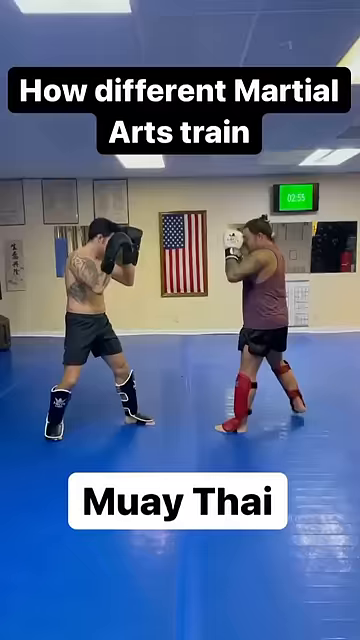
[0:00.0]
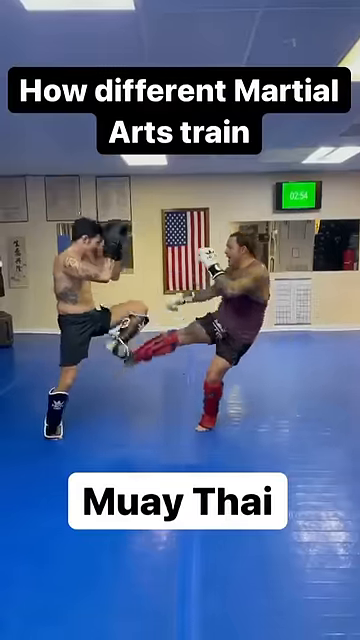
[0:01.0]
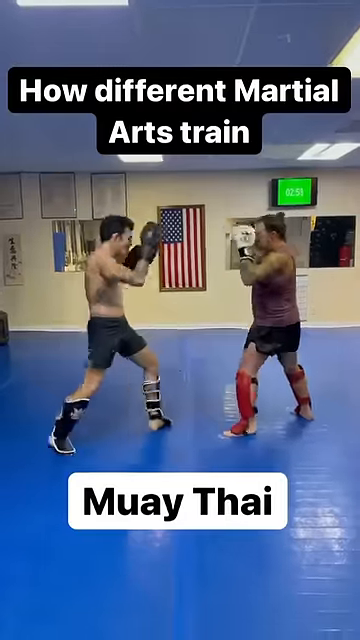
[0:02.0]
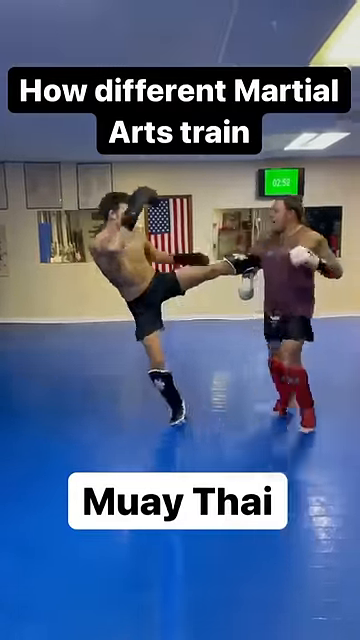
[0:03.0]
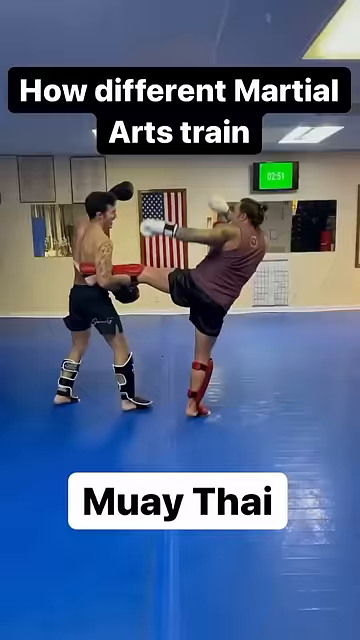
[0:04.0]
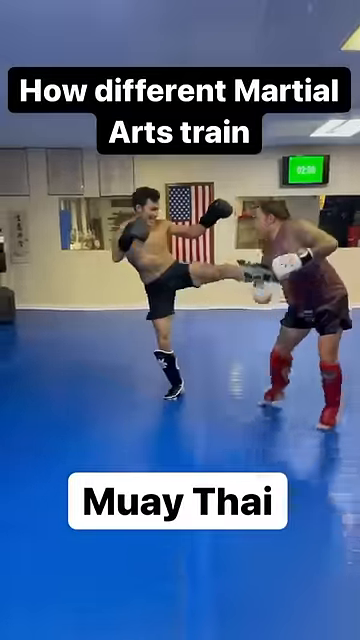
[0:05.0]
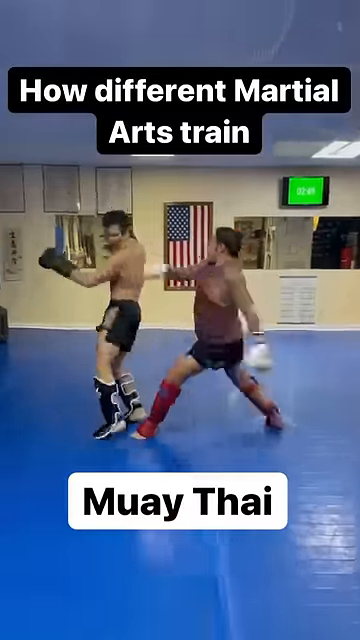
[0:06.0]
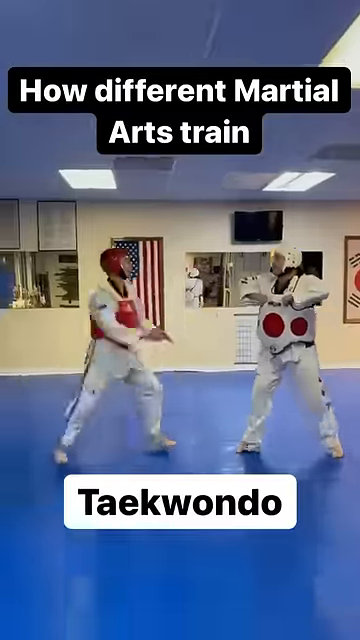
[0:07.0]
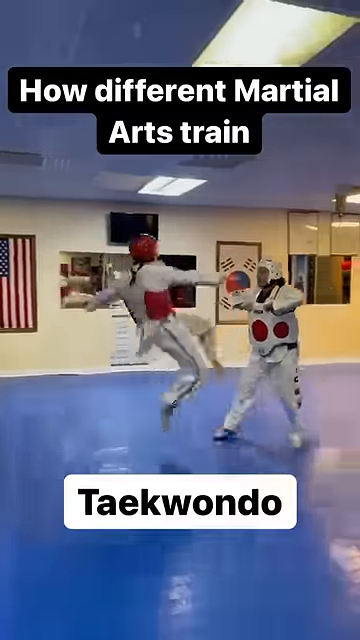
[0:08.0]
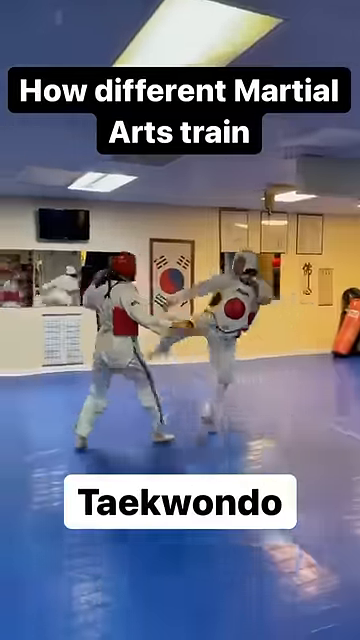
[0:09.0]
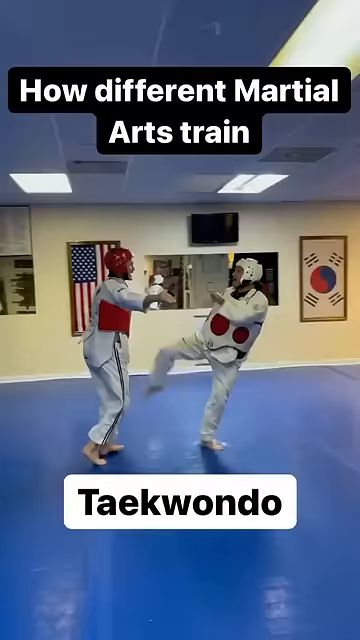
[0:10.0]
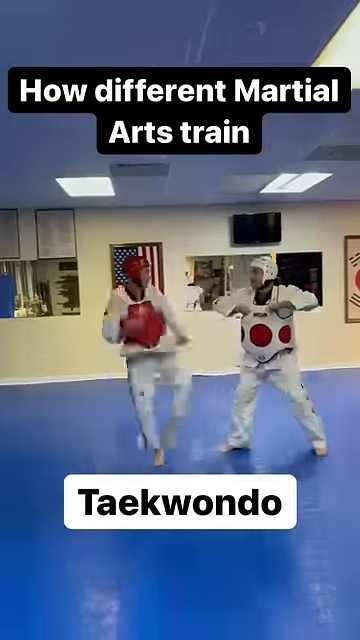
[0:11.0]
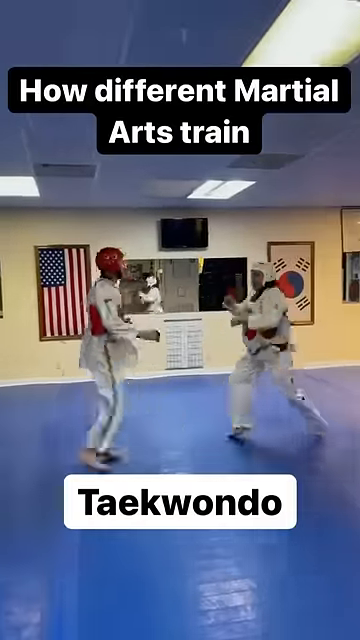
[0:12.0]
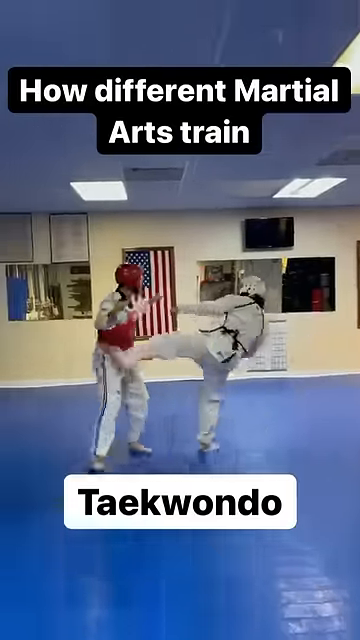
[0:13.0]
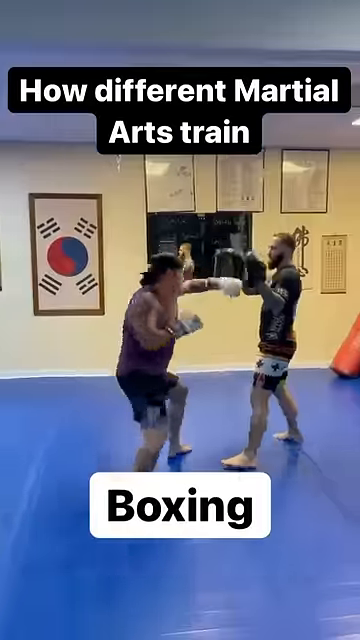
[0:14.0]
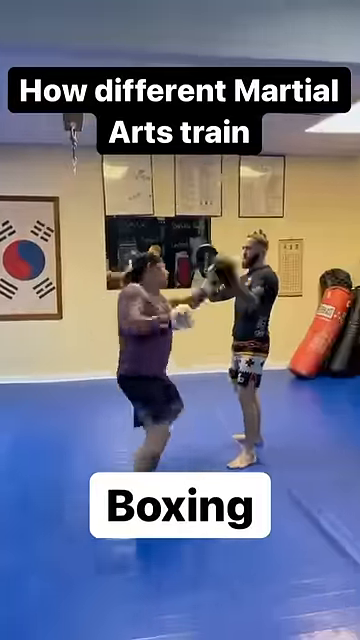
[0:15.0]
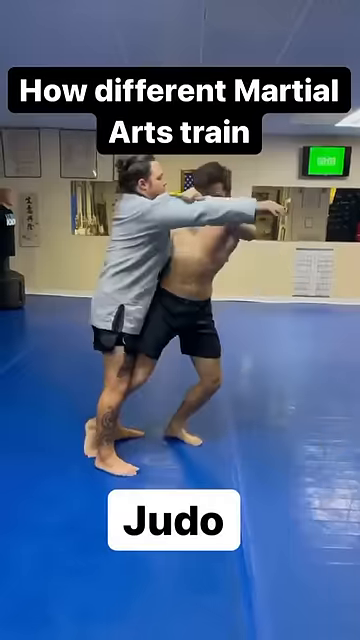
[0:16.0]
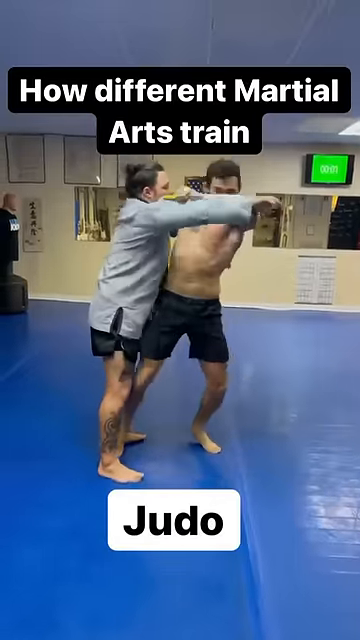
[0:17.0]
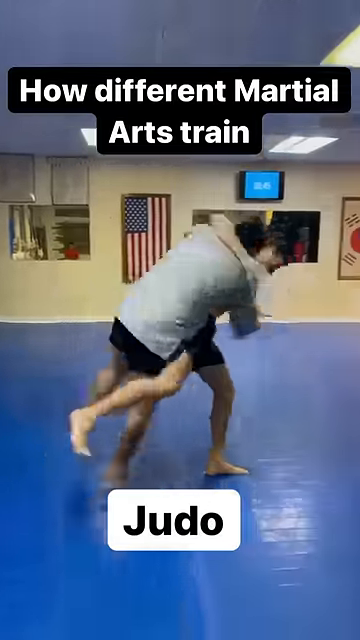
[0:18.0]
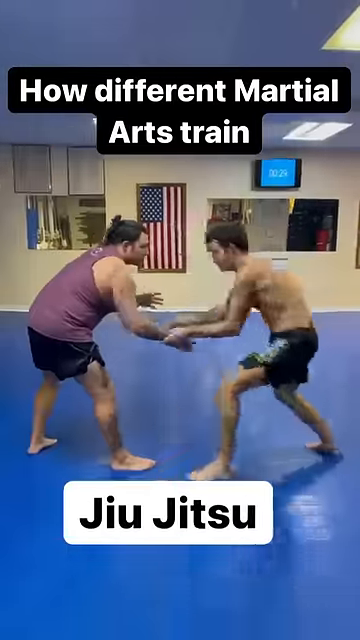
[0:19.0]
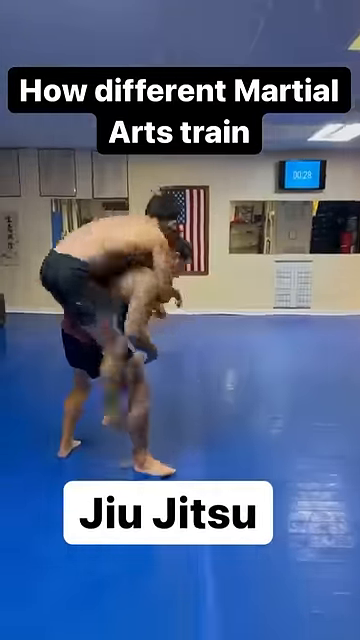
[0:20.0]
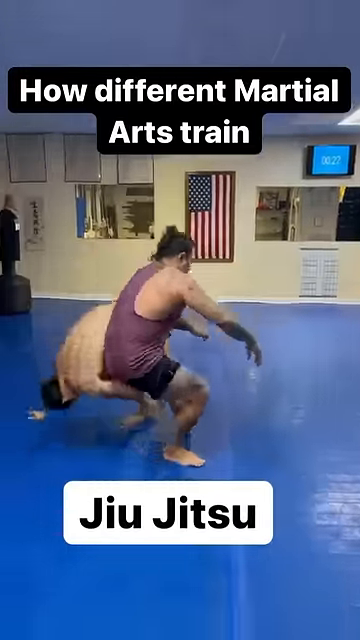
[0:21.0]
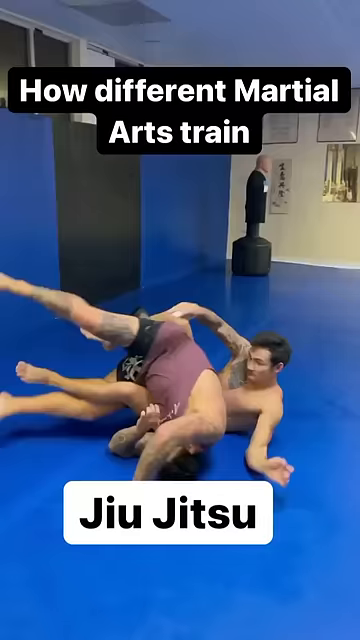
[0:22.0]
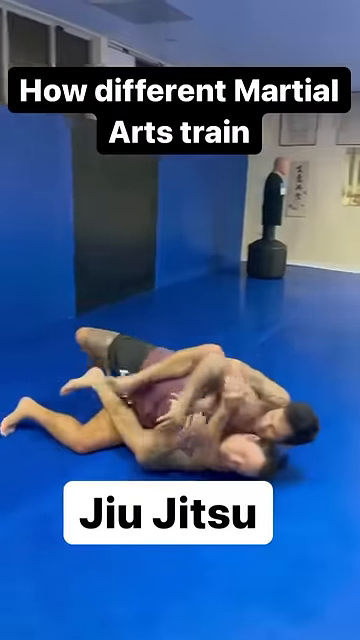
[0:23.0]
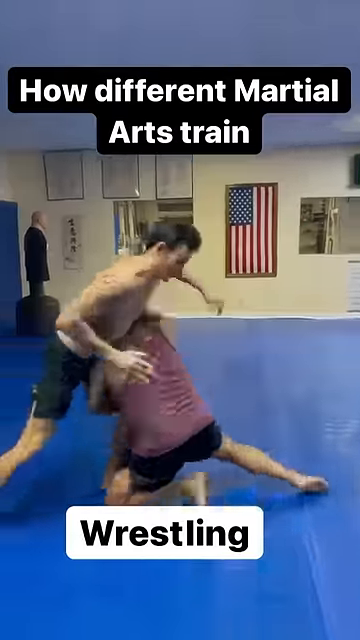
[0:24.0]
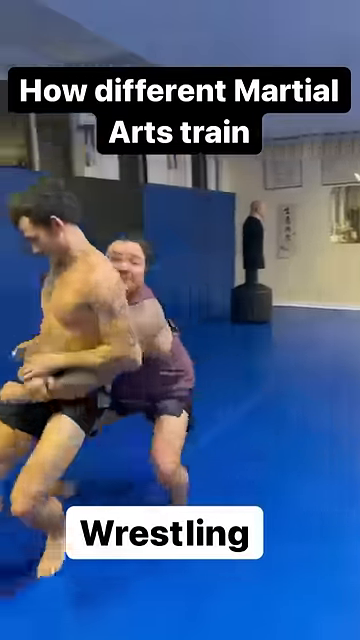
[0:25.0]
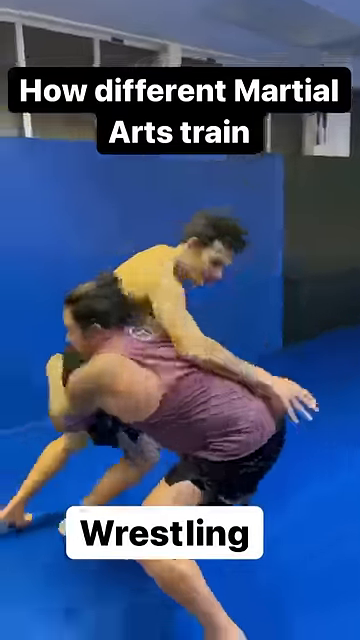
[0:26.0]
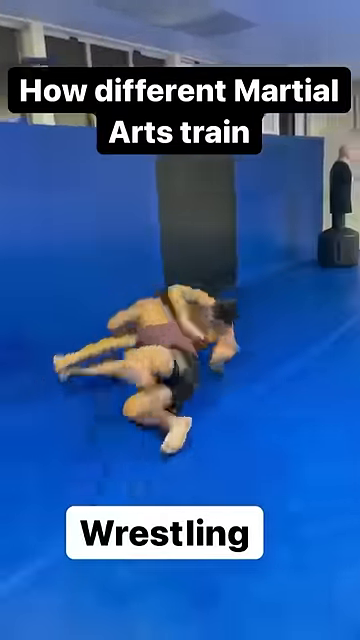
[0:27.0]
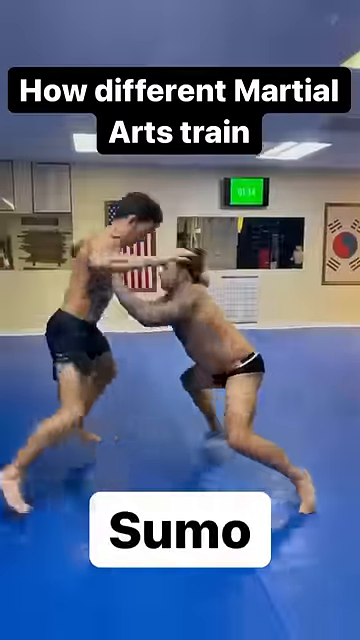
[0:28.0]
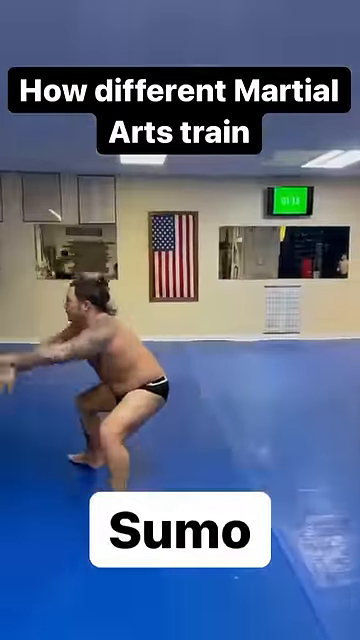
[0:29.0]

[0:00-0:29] On-screen text reads "how do martial artists train," and a series of different martial arts is shown. First is Muay Thai, with two people kicking each other repeatedly. Next is Taekwondo, again with kicking, this time with spins. Boxing follows, with punches being thrown. In Judo, one man apparently tosses the other. Jiu Jitsu shows what looks like a takedown into a choke. Wrestling follows, with the two kind of just wrestling, and the sequence ends with sumo, where the wrestlers basically push each other.